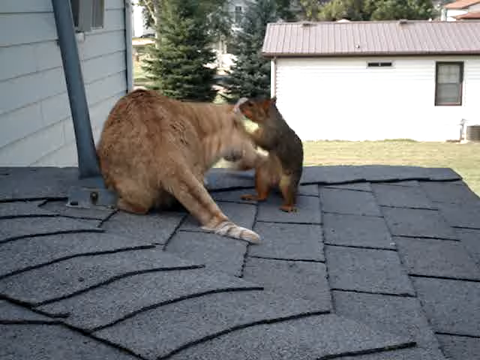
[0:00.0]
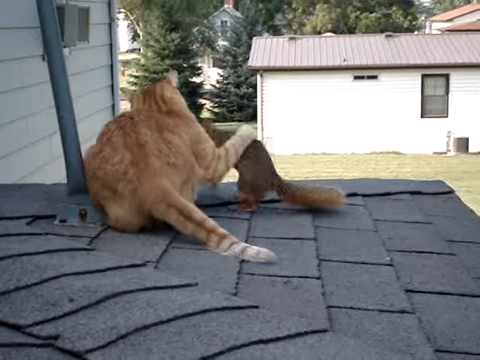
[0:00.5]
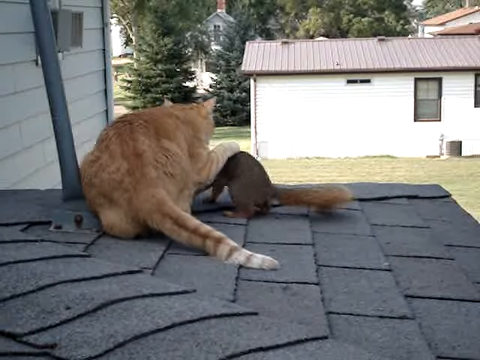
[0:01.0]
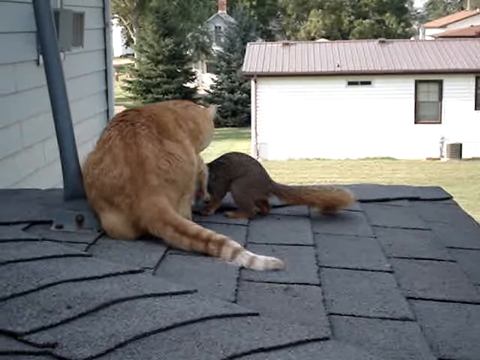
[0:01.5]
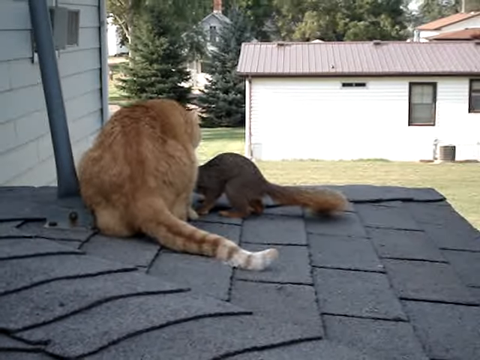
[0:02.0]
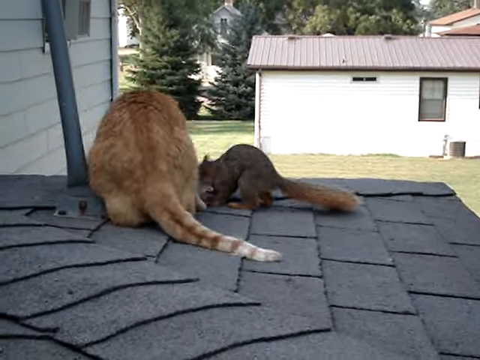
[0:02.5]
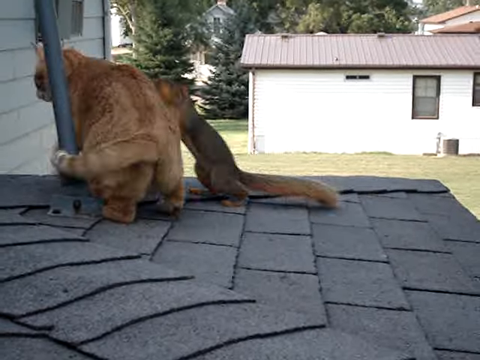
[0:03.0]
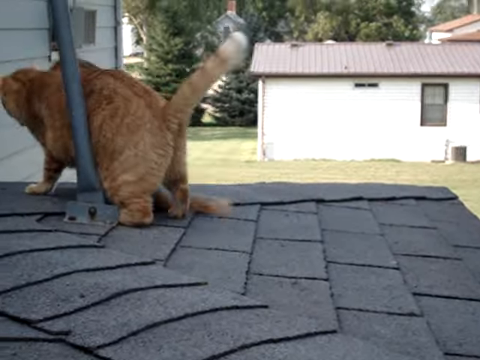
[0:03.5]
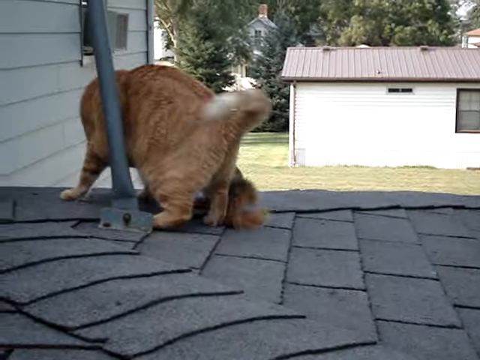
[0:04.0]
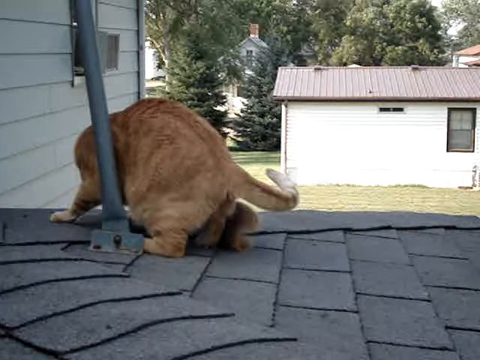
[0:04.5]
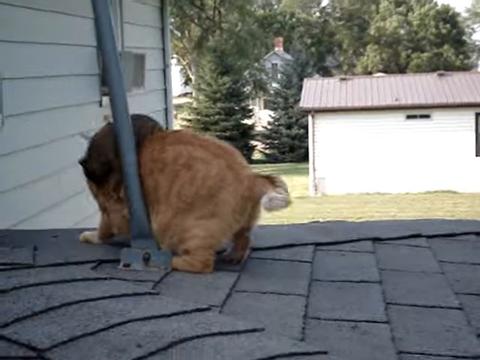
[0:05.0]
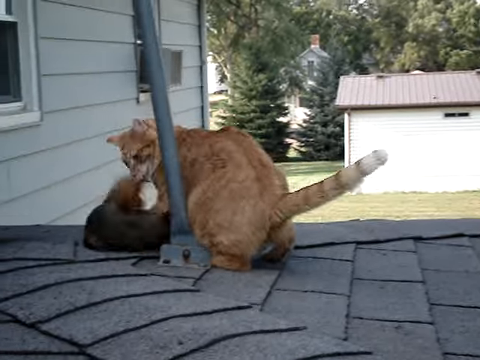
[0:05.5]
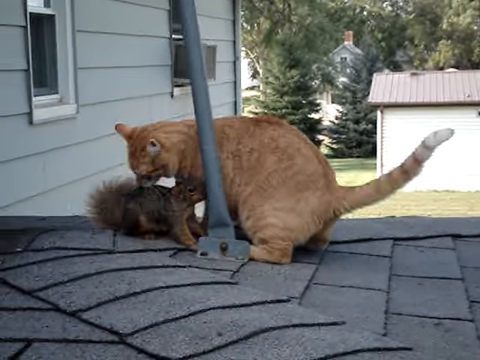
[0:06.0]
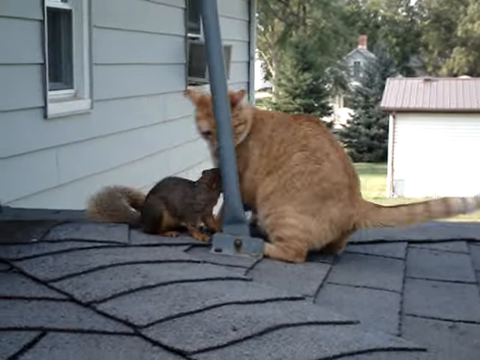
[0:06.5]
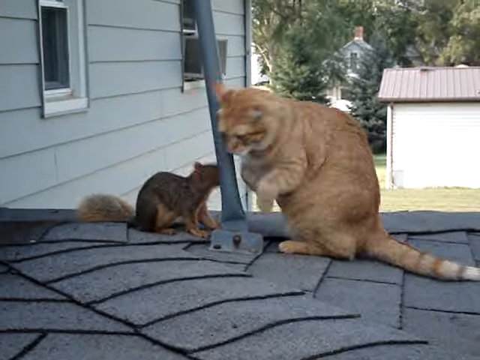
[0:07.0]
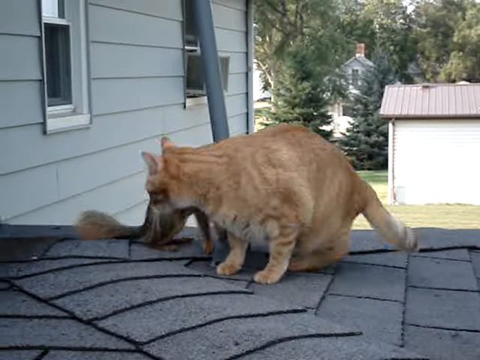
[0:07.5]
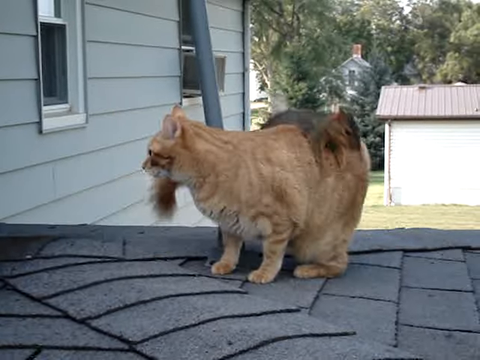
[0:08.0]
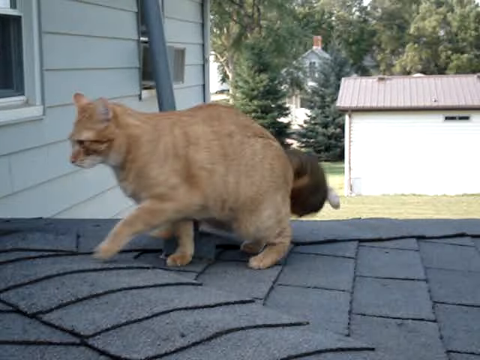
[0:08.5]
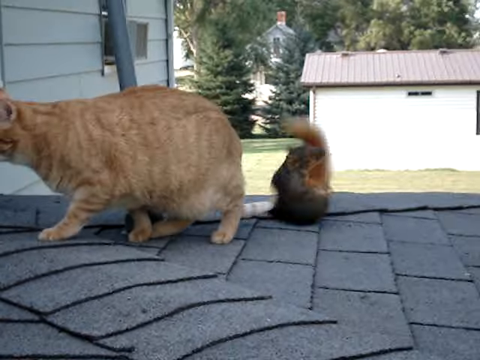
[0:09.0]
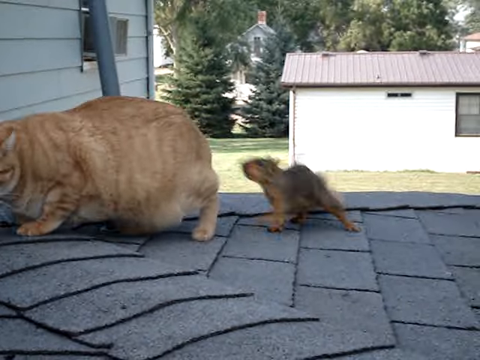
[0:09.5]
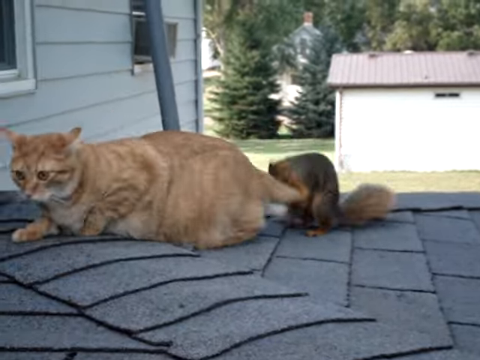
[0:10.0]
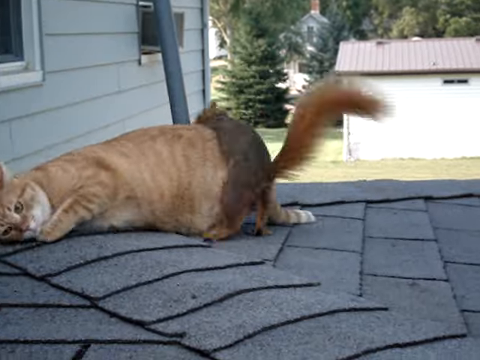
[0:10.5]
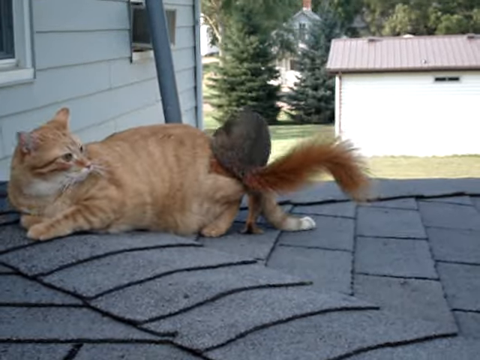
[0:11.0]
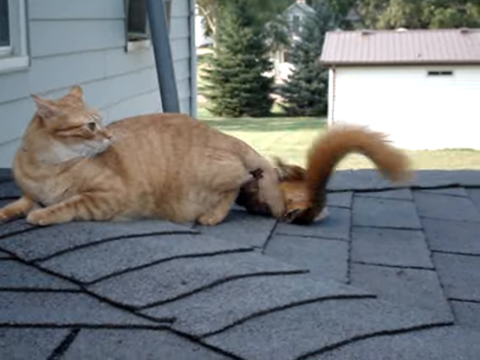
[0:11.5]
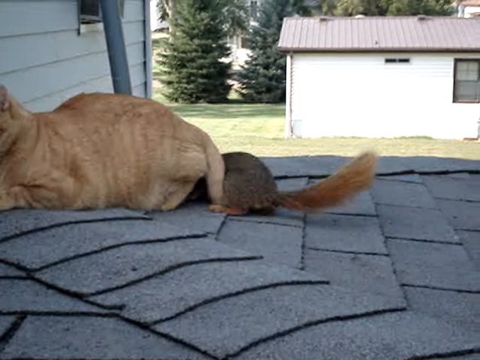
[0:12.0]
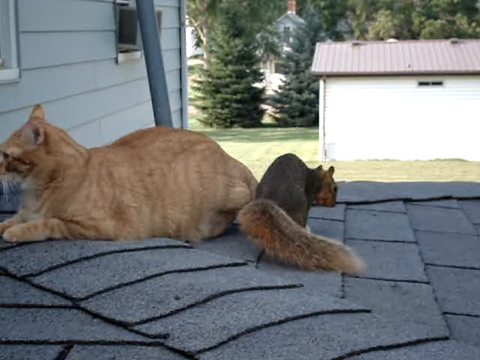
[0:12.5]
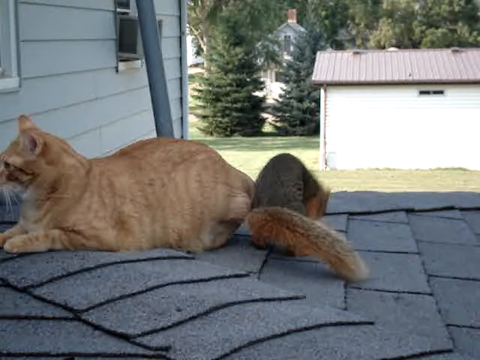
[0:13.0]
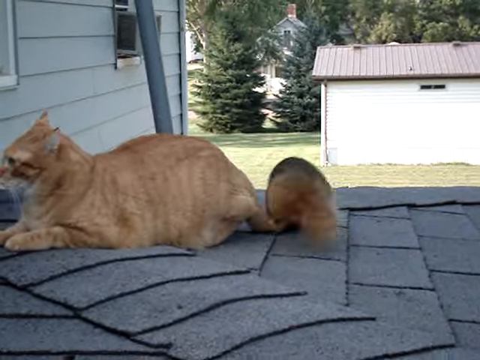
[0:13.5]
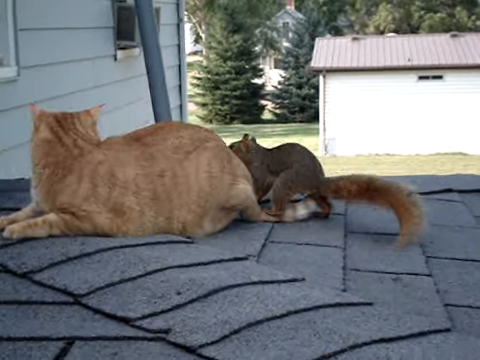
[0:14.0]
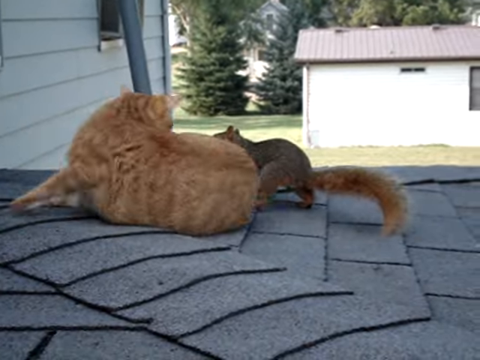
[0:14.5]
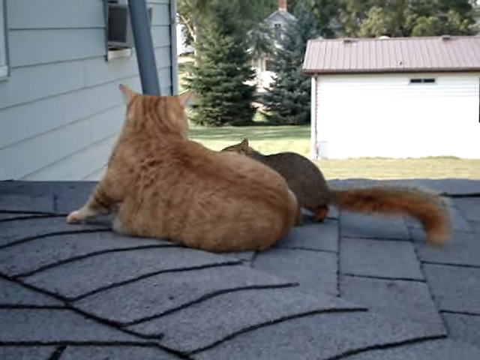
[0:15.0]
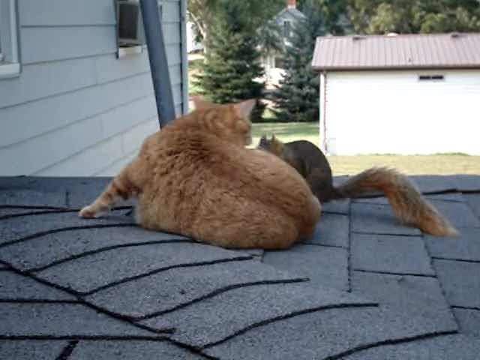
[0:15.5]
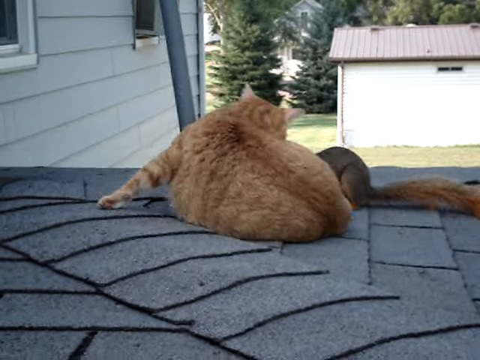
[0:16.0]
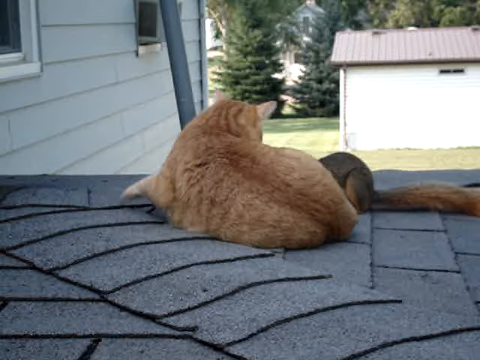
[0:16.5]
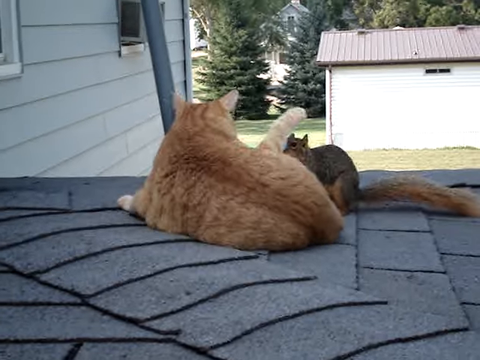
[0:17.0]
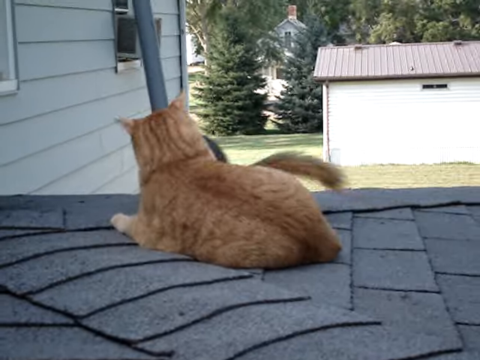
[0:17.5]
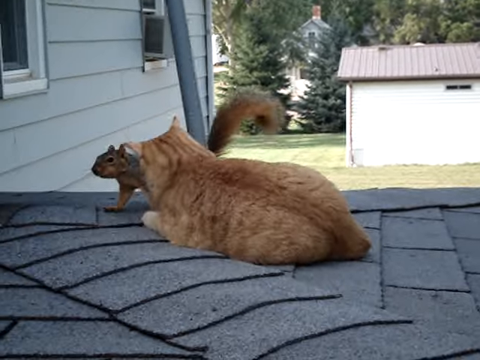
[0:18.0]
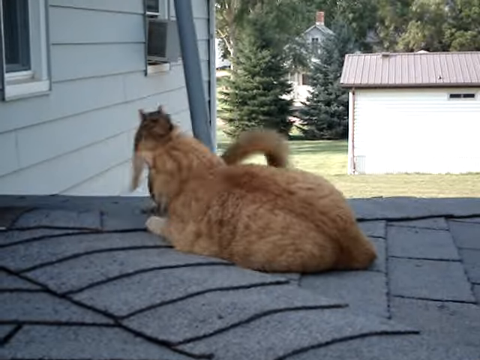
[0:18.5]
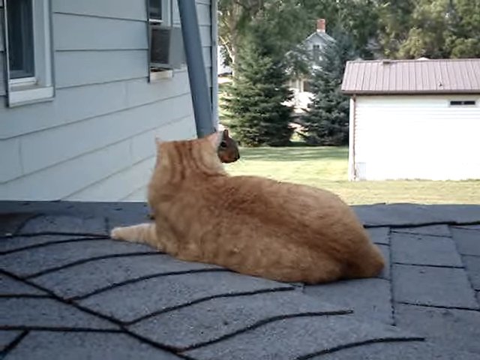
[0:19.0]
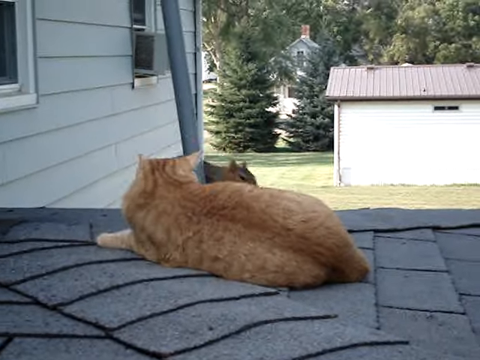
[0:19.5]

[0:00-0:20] Two animals are playing on the roof of a house. In front of them, the scenery looks to be a home environment, with other houses around and no people in sight. One animal is a ginger-coloured cat and the other is a small squirrel with a little bushy tail. The cat runs around the squirrel, the squirrel does the same, and then the squirrel jumps on top of the cat's back. The cat lies down and the squirrel continues to play with it. The cat is very fat, a big cat with a huge tummy. The squirrel plays with the cat's tail. The cat moves its head forward and keeps trying to bite the squirrel, and the squirrel does the same to the cat.